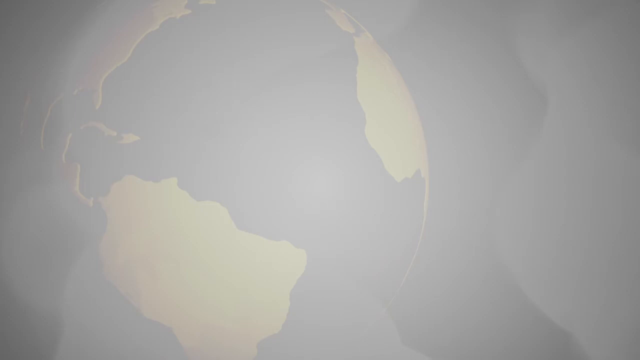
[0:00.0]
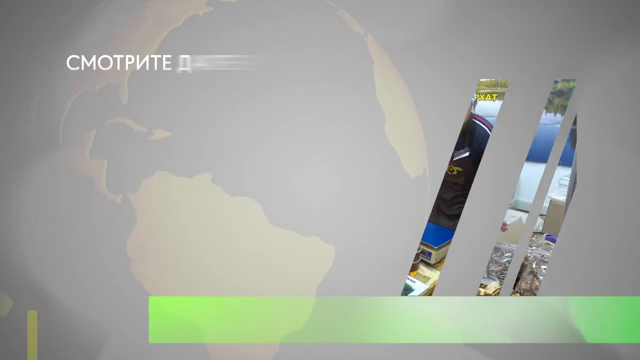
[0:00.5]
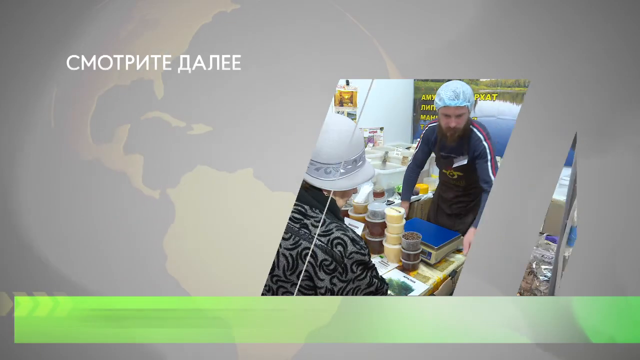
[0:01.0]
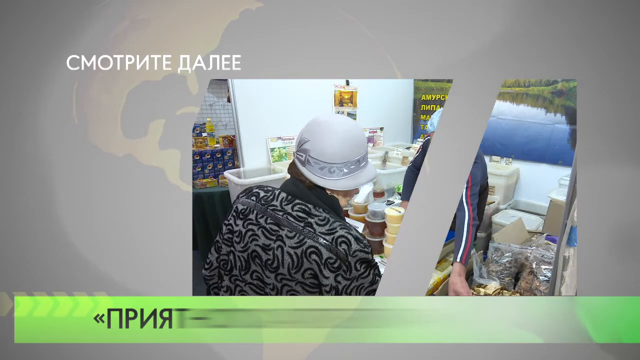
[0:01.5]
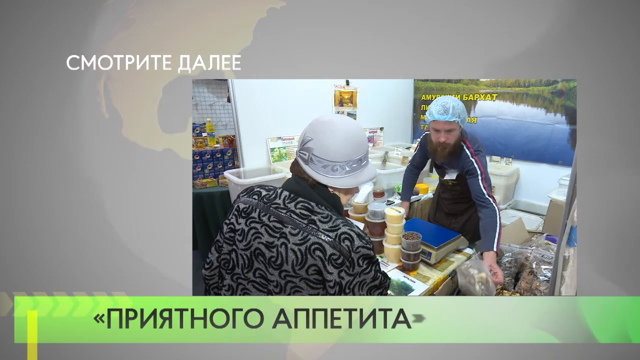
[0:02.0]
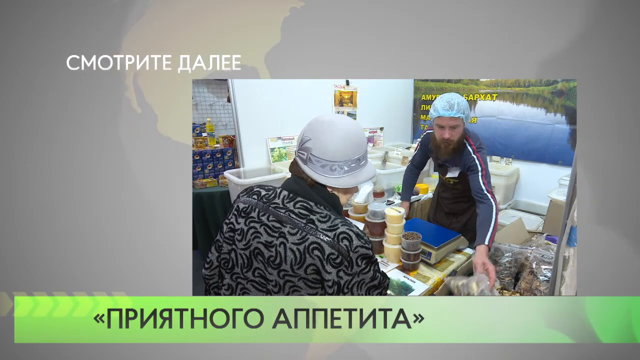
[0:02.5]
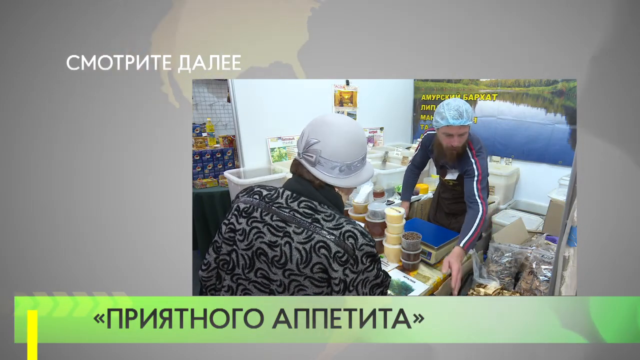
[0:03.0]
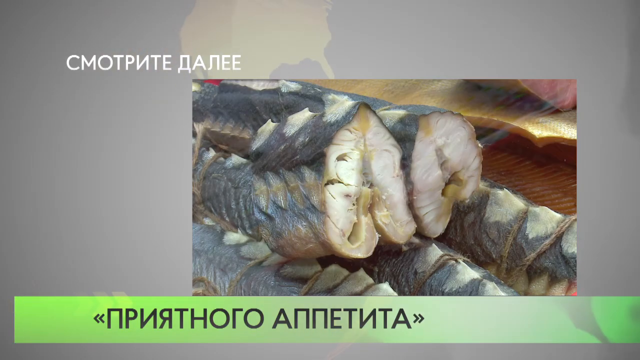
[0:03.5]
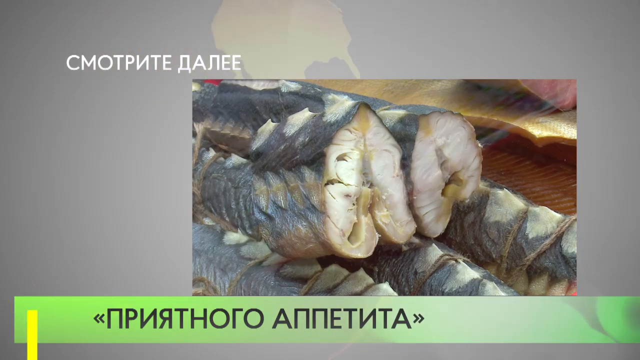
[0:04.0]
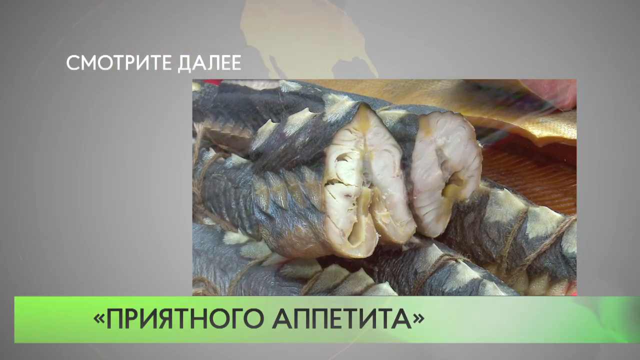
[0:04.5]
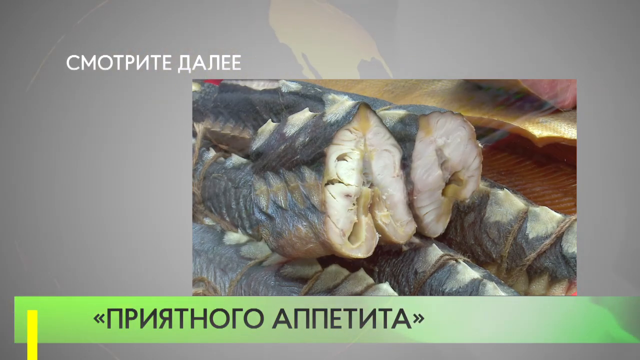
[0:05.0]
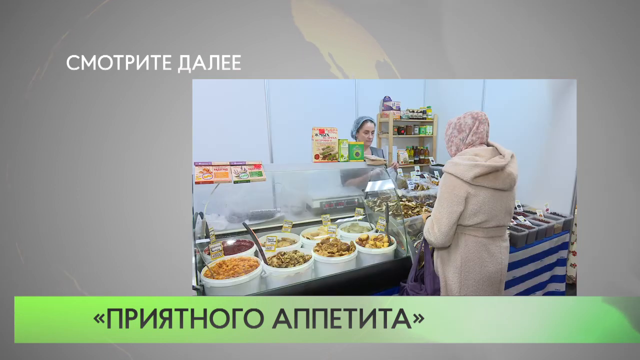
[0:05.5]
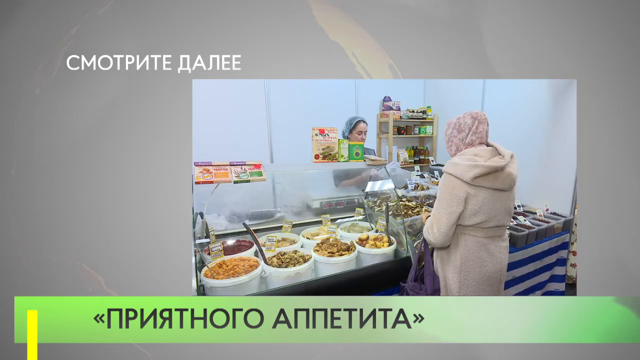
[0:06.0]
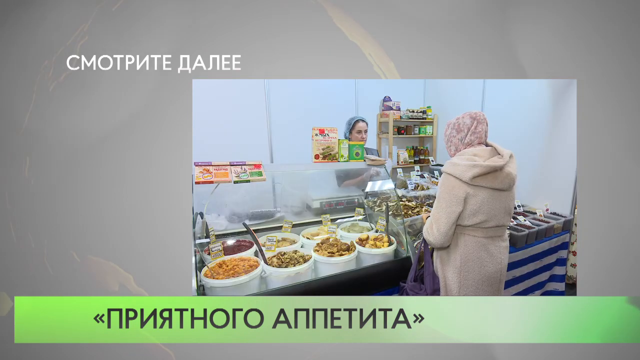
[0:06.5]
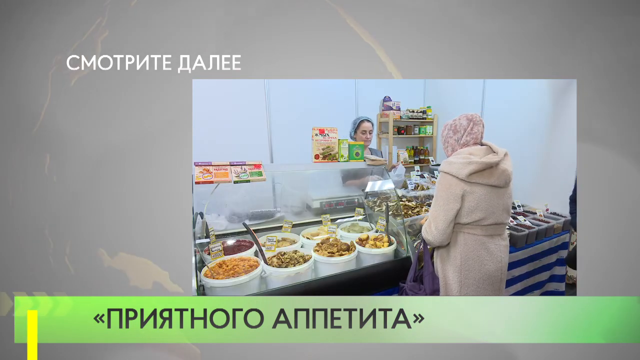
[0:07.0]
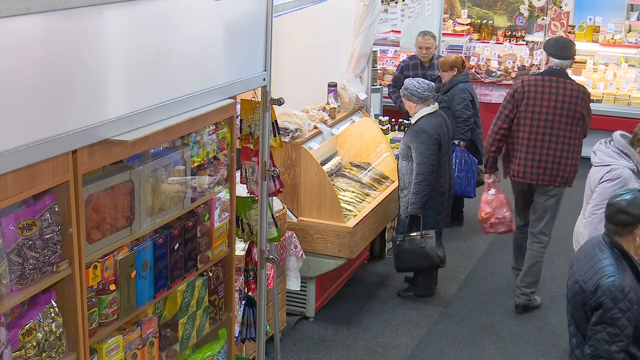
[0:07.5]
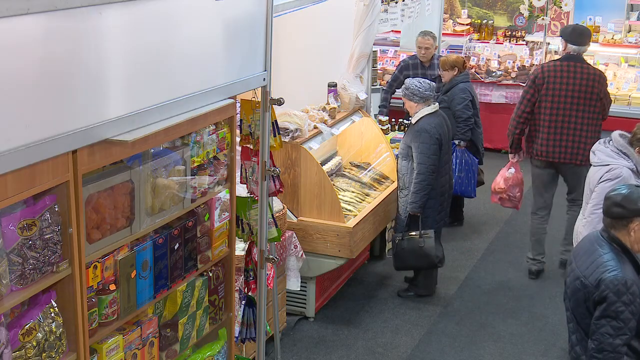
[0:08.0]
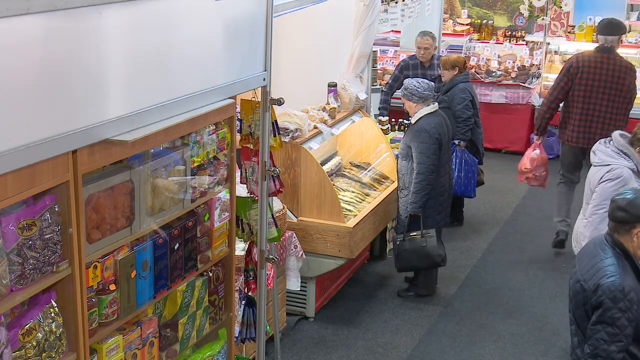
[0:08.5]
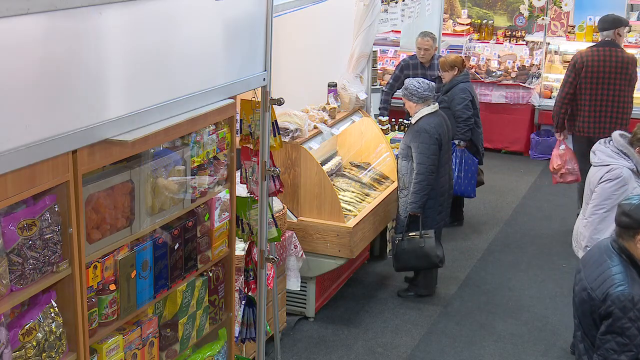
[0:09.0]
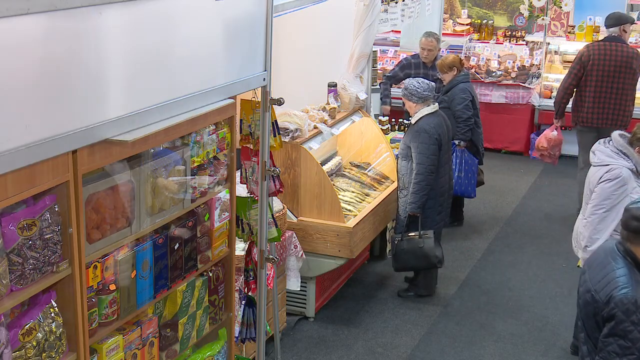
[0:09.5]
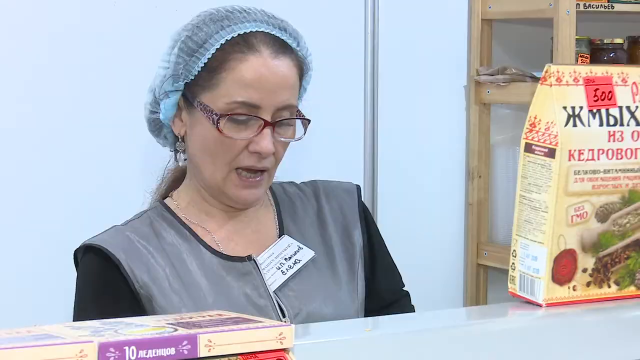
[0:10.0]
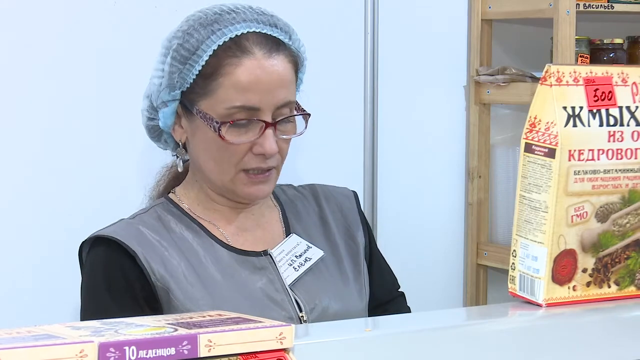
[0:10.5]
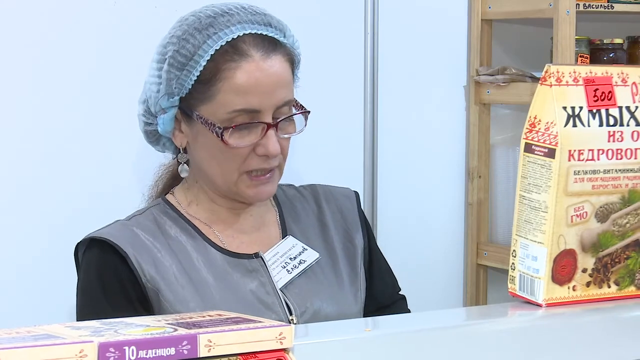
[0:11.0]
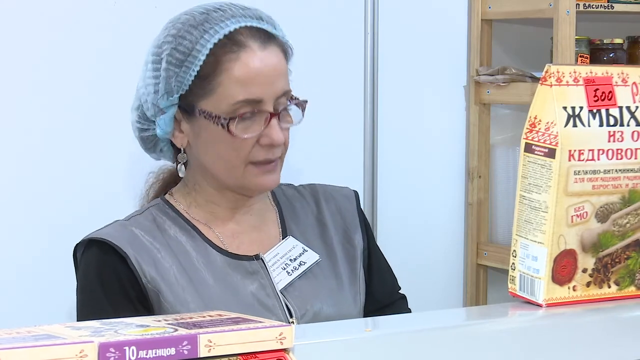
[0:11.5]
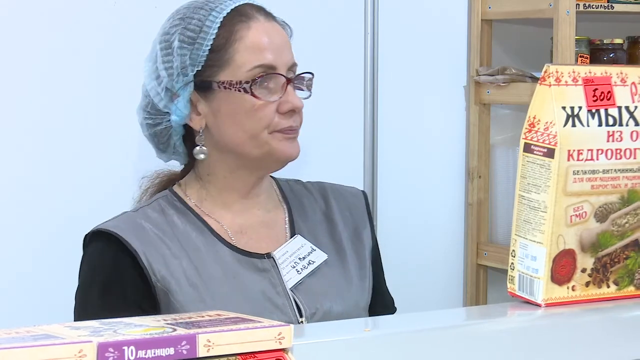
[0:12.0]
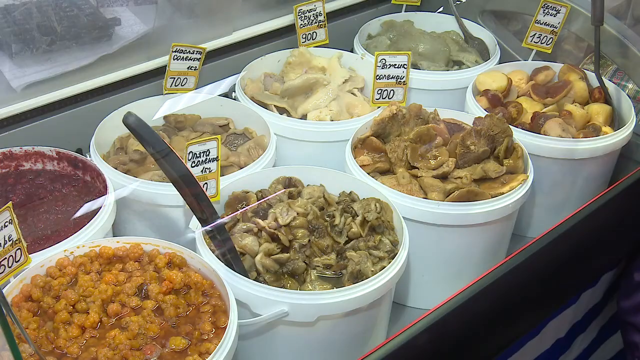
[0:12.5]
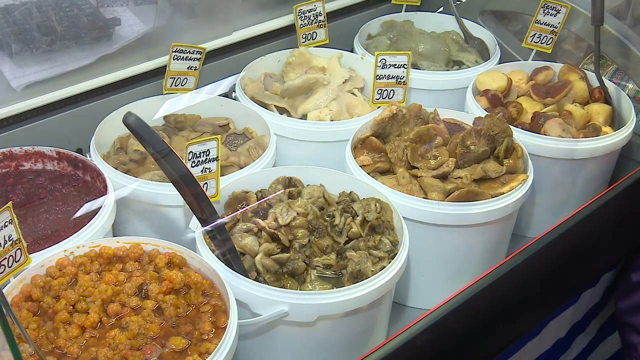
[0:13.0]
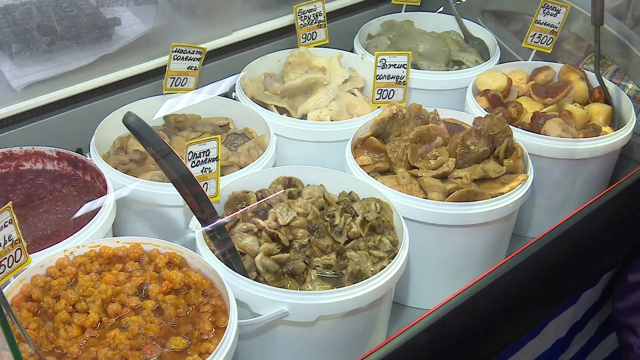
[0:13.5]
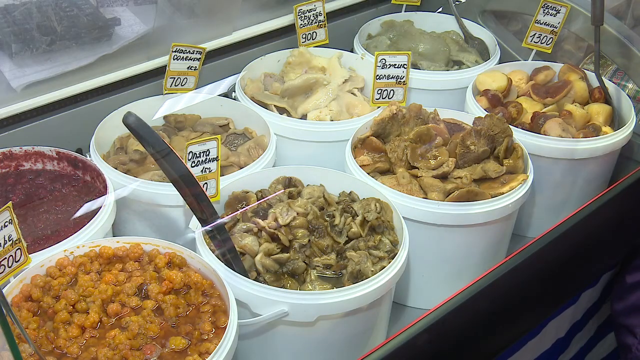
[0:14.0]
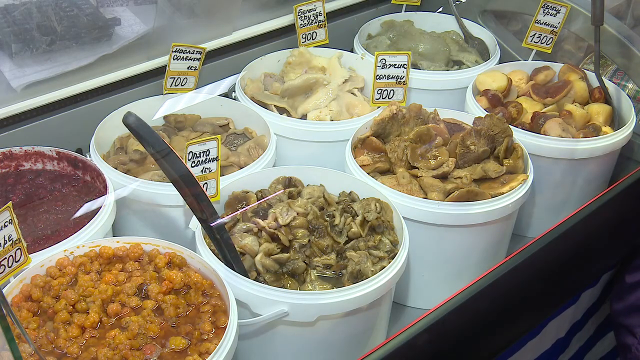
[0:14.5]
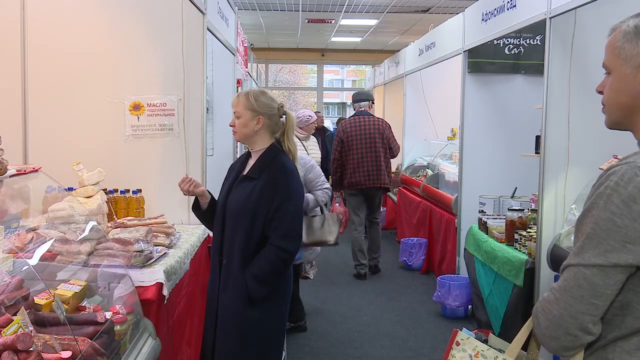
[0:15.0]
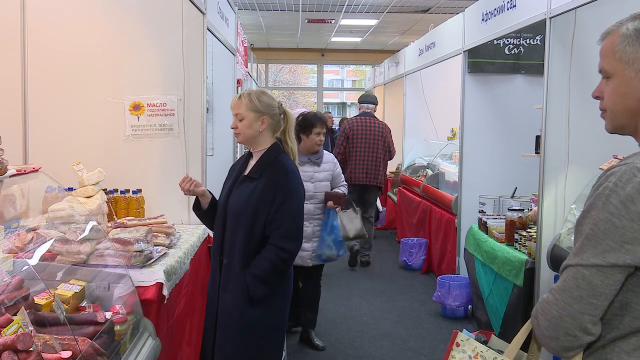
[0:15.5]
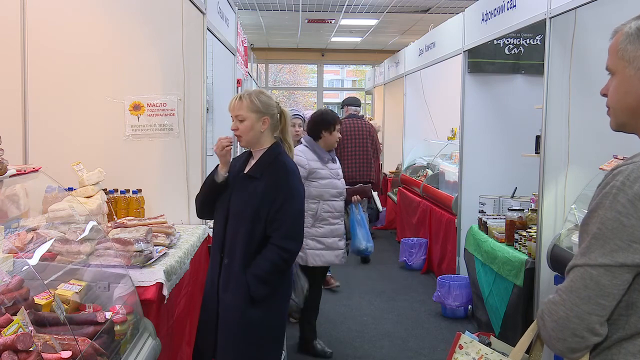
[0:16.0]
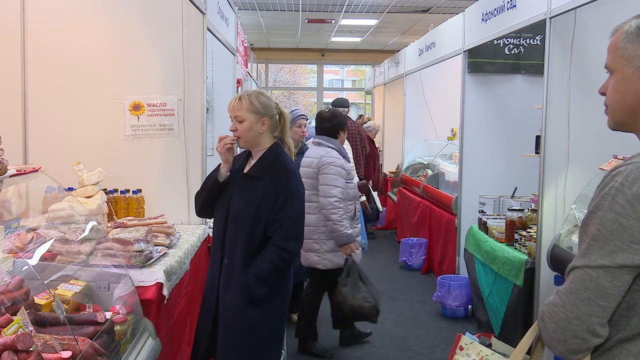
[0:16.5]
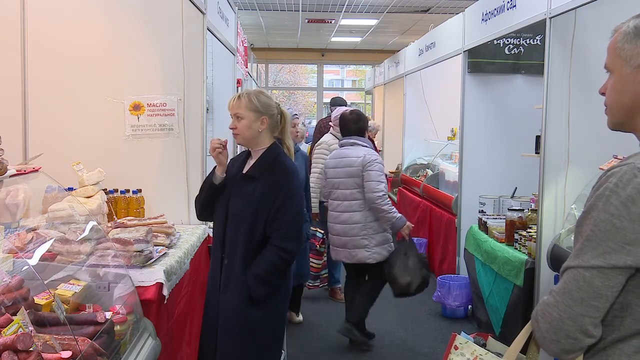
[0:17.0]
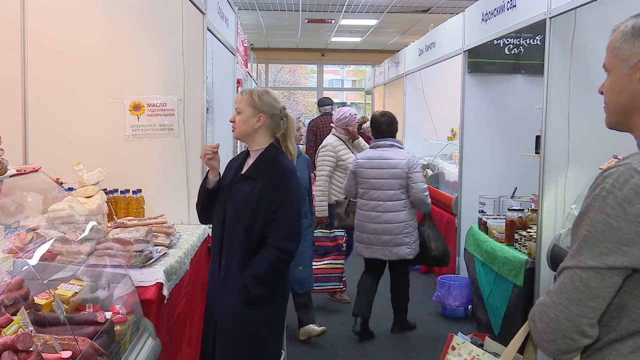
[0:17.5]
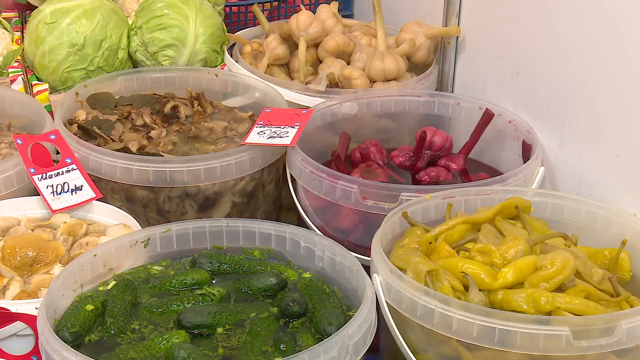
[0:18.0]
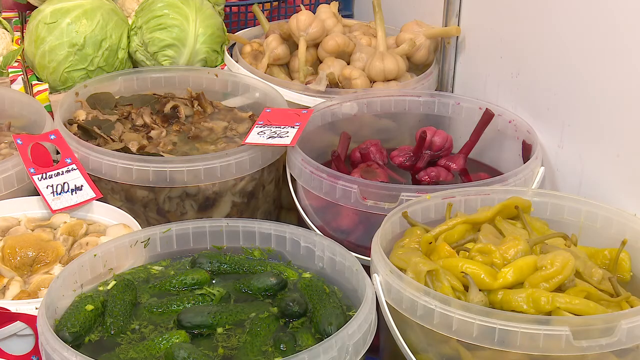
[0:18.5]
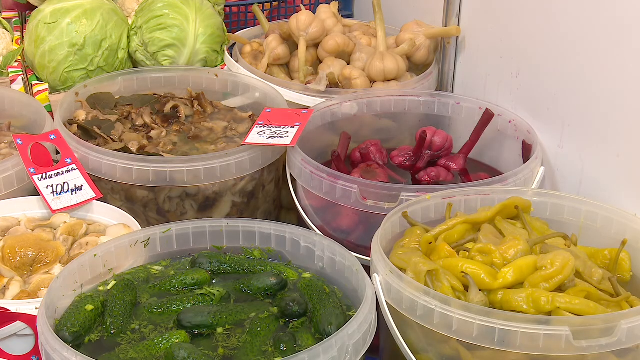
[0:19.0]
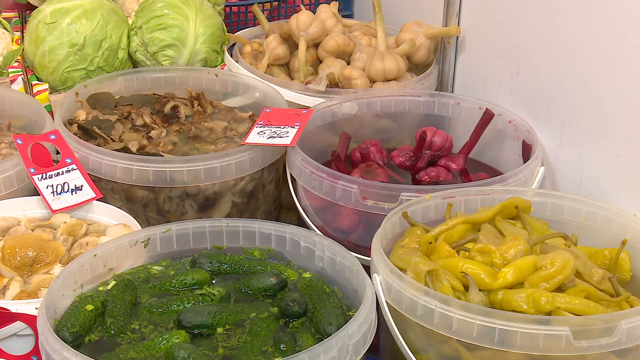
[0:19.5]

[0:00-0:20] The video opens on a background with a globe on the left side and empty space on the right, a grayish color overall, with the landmasses on the globe a silvery color. A picture comes in from the right side as foreign-language text scrolls in at the top right or left corner. The picture is positioned about two inches from the top, two inches from the right and three inches from the left. It shows what looks like some sort of food dispensary. A person with their back to the camera wears a black and gray jacket and a white hat with a silver rim; this is apparently a woman. In front of her to the right, facing the camera, is a man in a hairnet and a long blue shirt with red and white stripes down the sleeves. Food in plastic containers is in front of them to the right, along with bags of something that kind of looks like marijuana. In the background there is a TV at the top right and a white wall, and there is some packaging of food or something on the left side. The video then cuts to some food that has been cut, then to a woman standing in front of another woman who is putting an unidentified food in a bag as they talk. It then cuts to different areas of the market, with people walking around, and to plastic bowls holding different types of food.